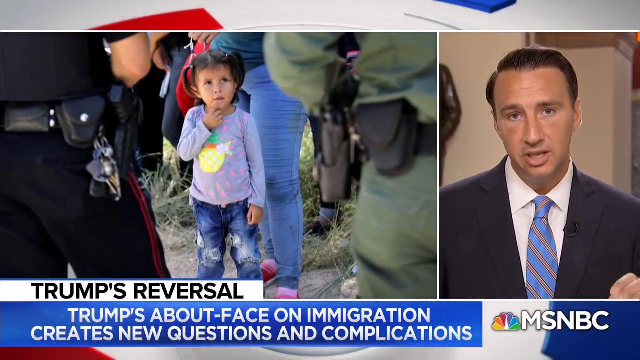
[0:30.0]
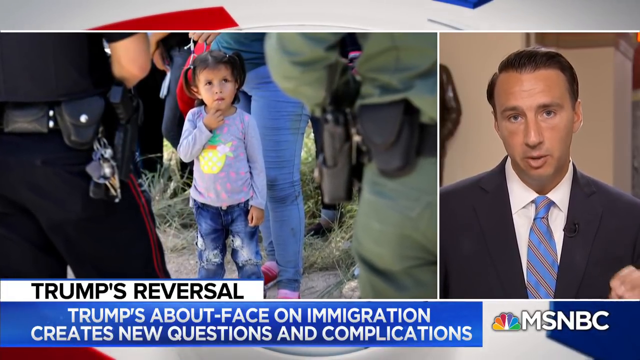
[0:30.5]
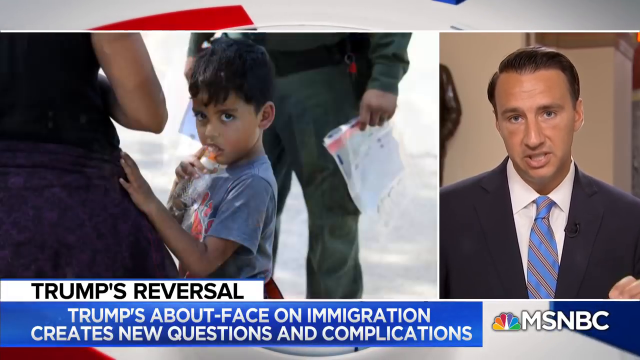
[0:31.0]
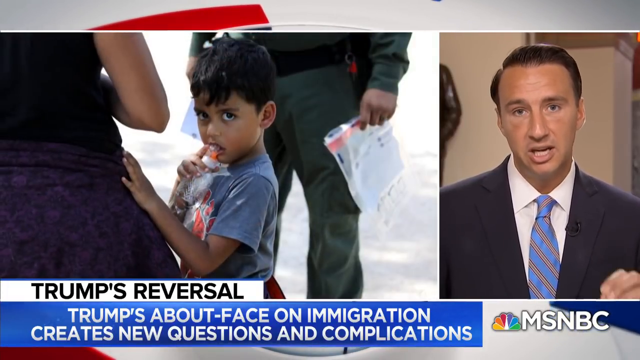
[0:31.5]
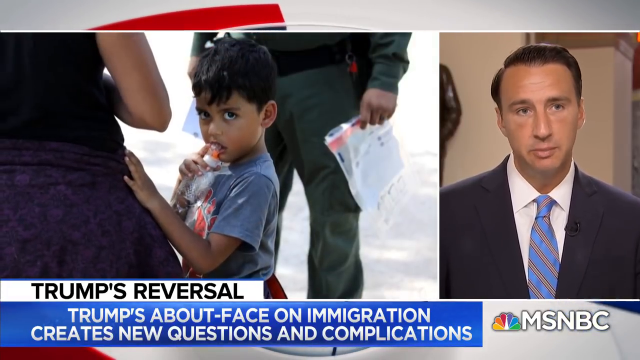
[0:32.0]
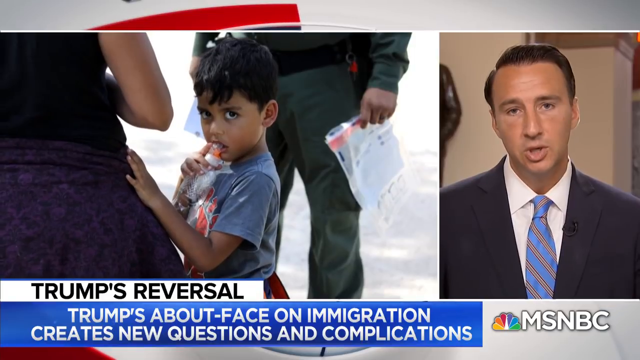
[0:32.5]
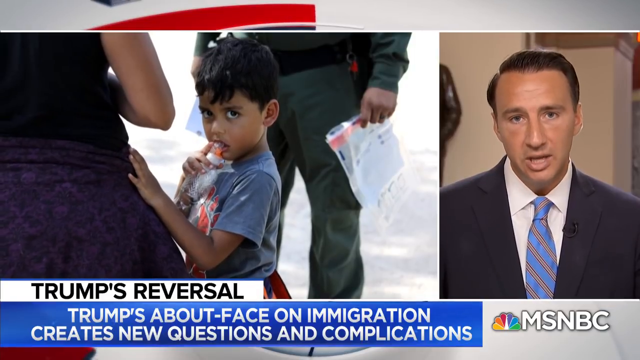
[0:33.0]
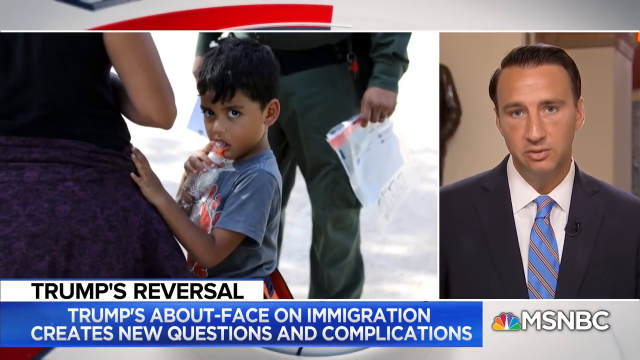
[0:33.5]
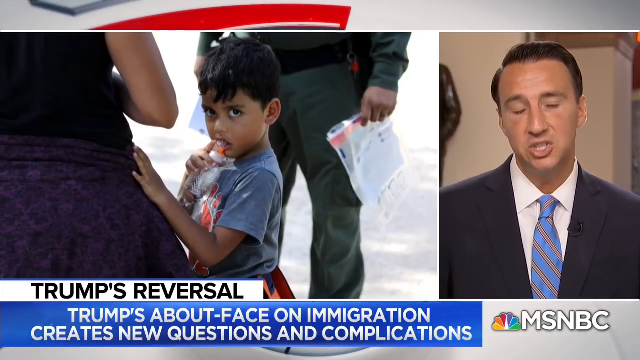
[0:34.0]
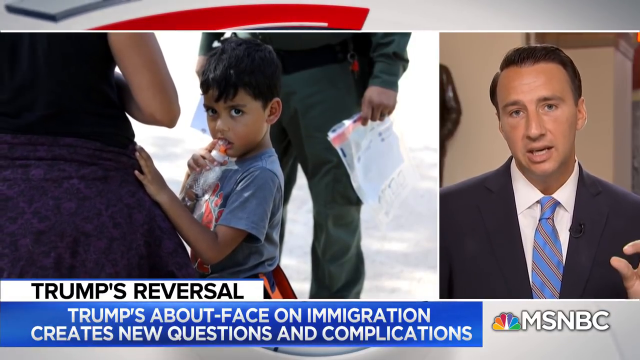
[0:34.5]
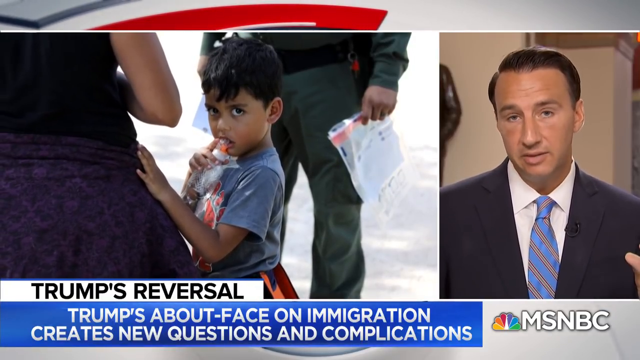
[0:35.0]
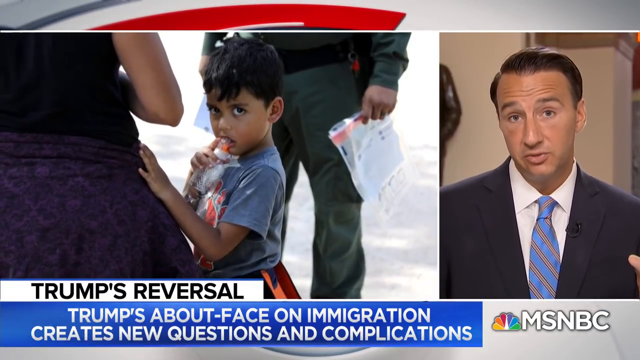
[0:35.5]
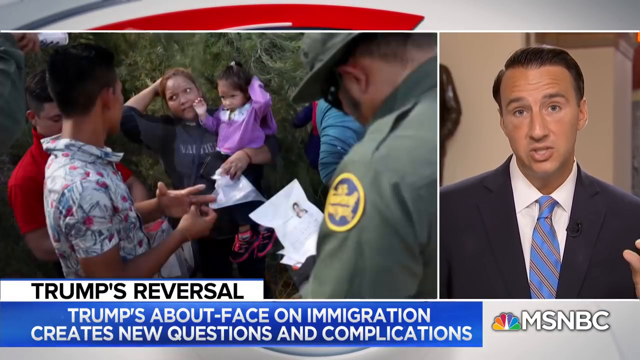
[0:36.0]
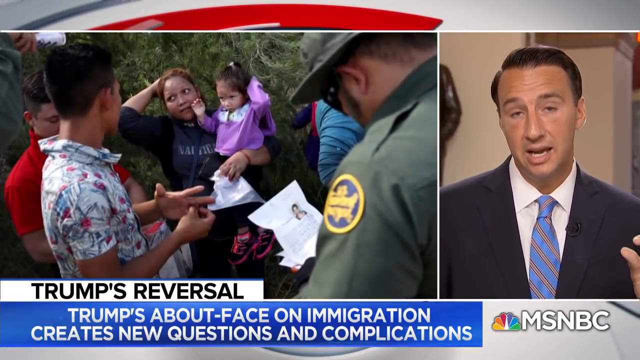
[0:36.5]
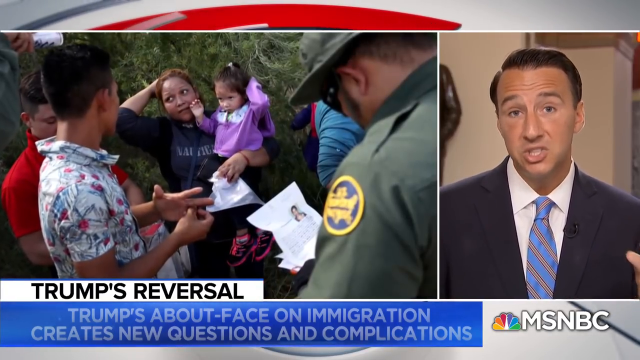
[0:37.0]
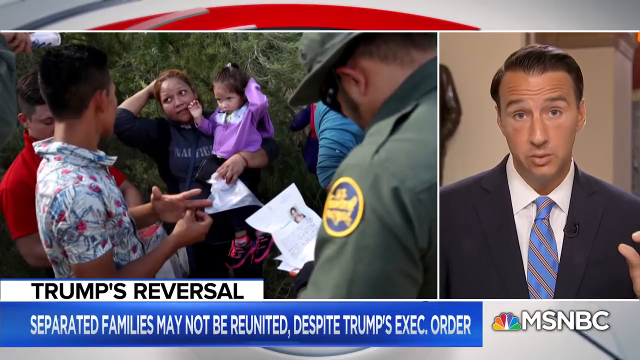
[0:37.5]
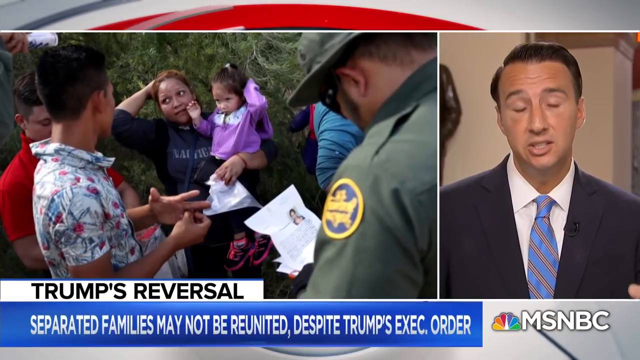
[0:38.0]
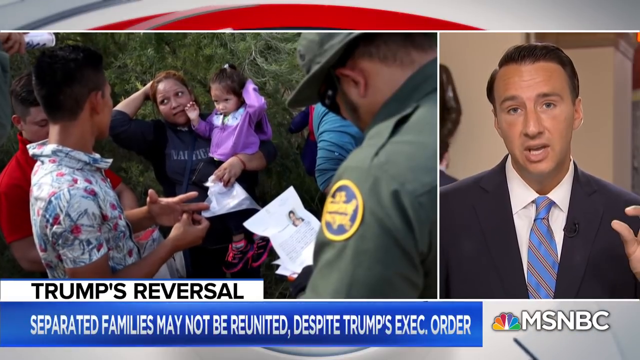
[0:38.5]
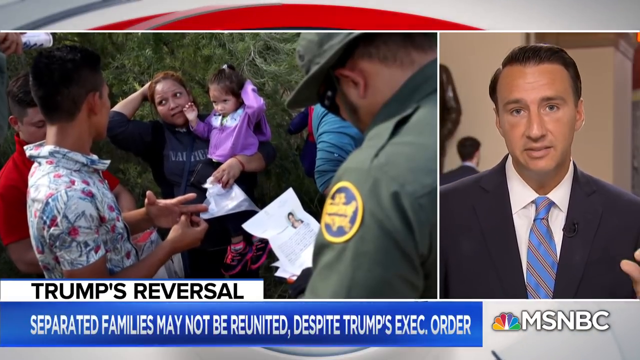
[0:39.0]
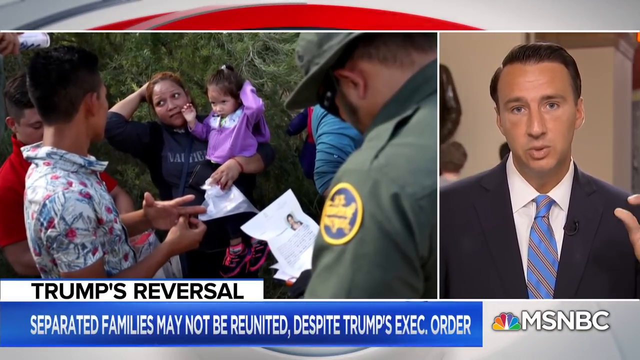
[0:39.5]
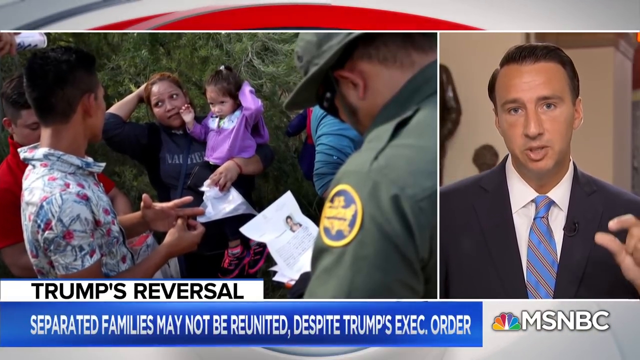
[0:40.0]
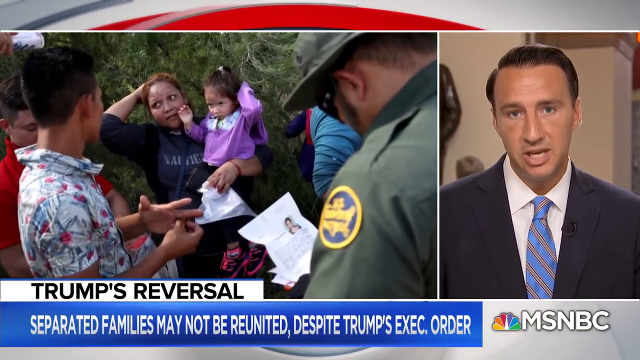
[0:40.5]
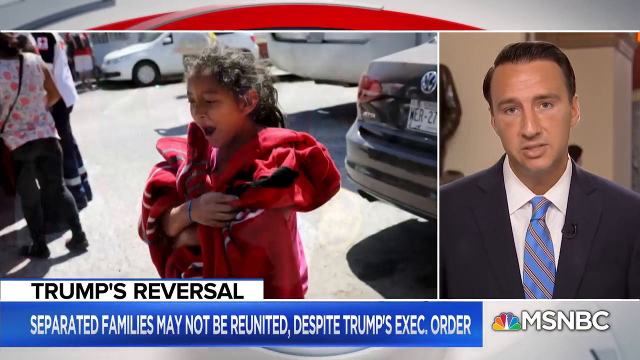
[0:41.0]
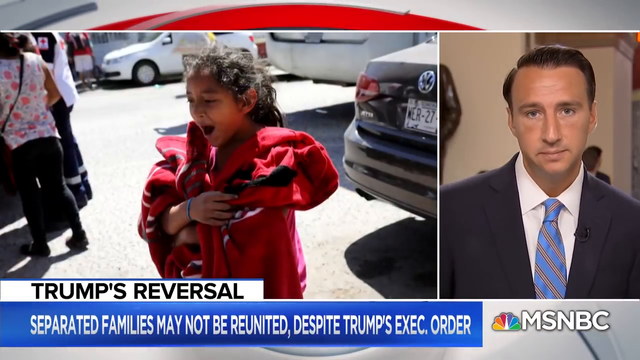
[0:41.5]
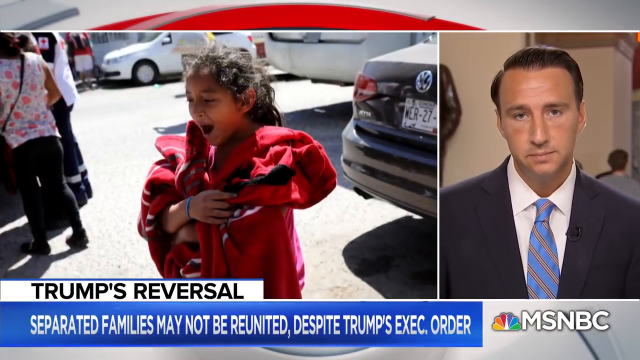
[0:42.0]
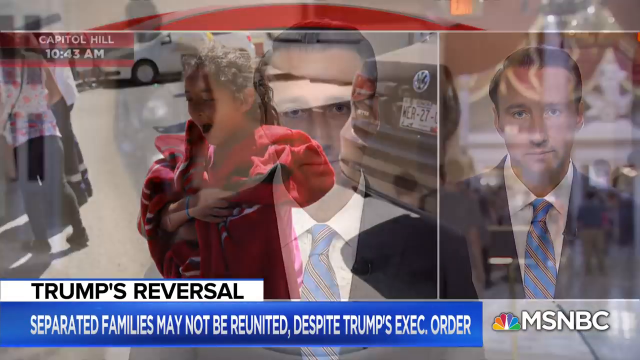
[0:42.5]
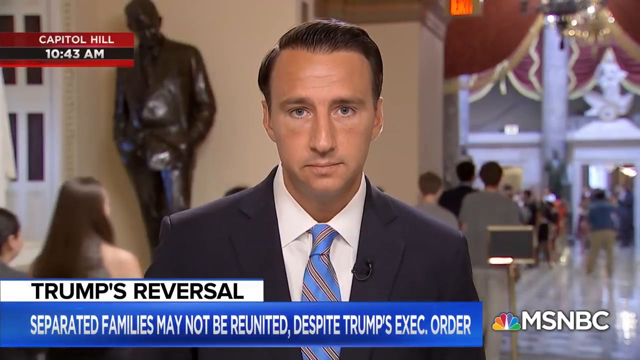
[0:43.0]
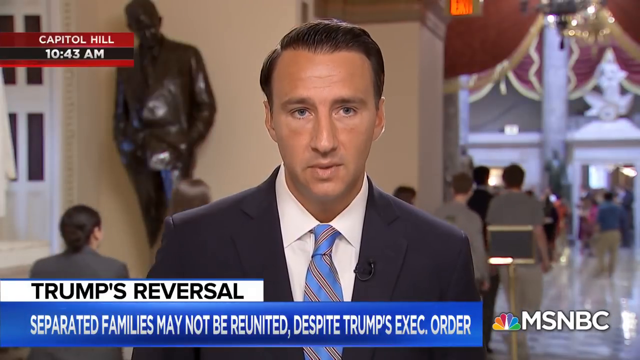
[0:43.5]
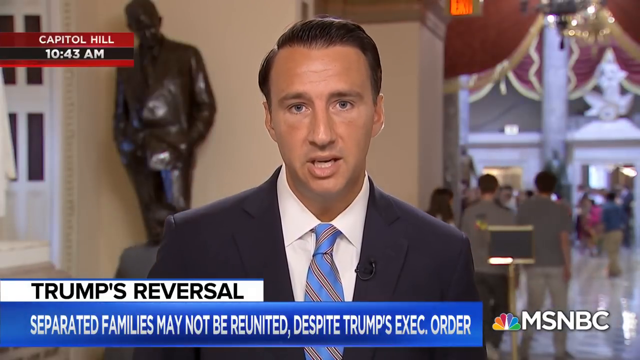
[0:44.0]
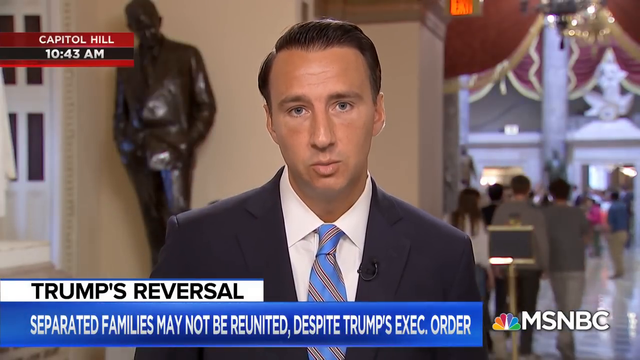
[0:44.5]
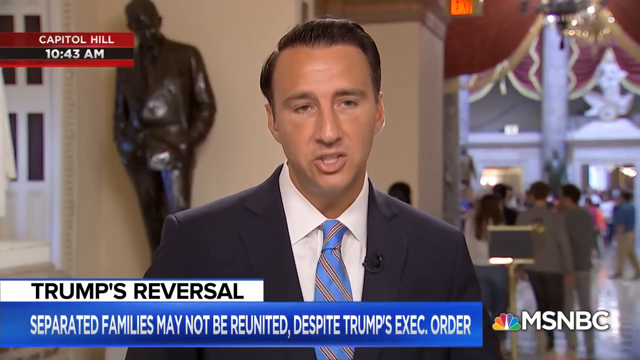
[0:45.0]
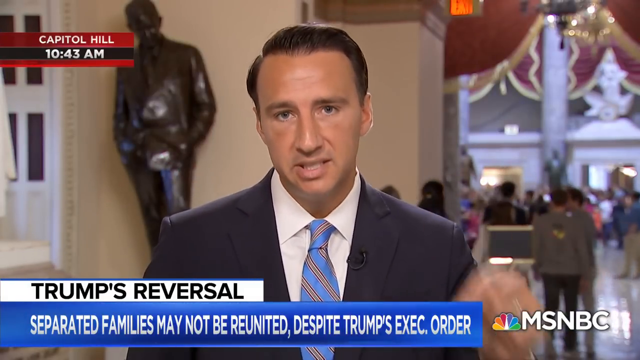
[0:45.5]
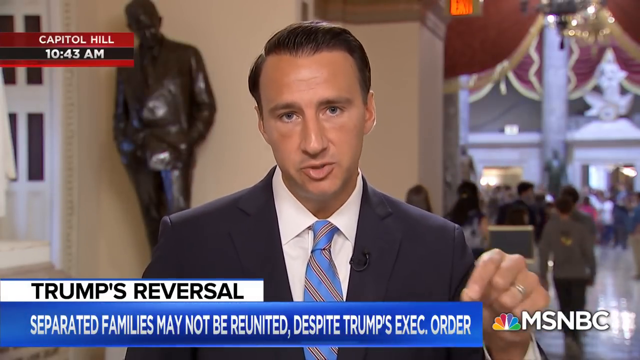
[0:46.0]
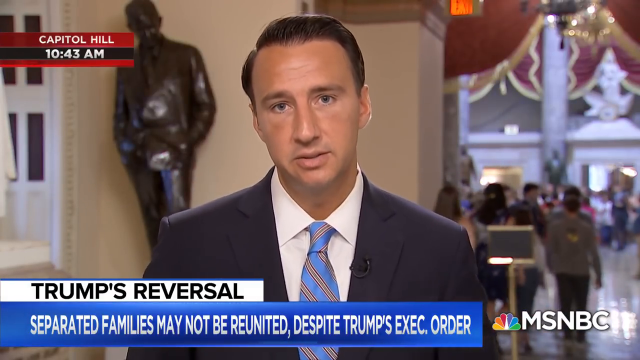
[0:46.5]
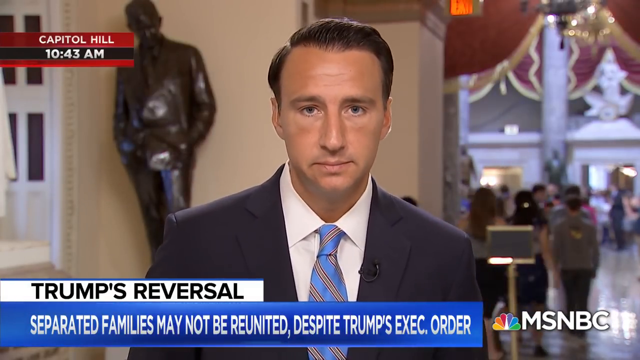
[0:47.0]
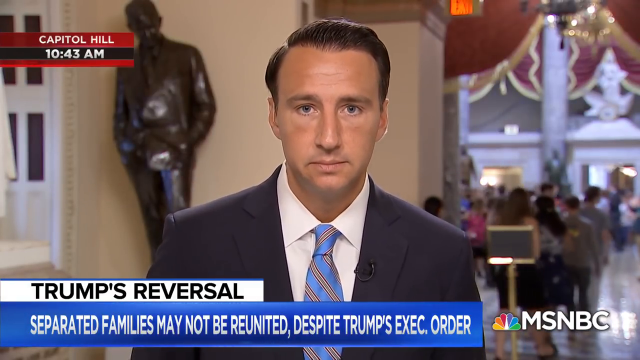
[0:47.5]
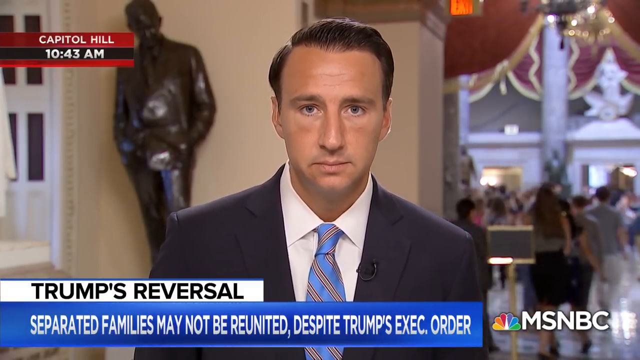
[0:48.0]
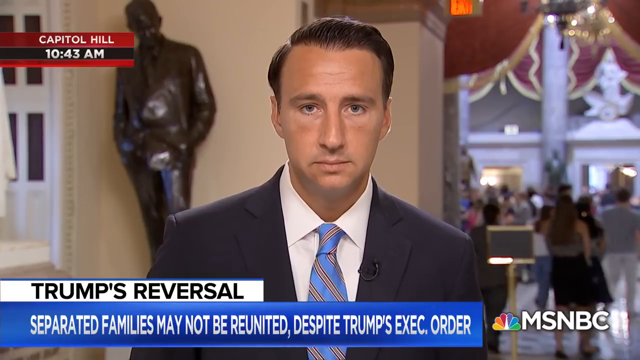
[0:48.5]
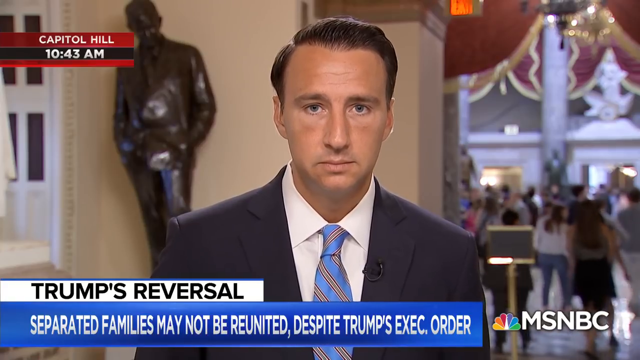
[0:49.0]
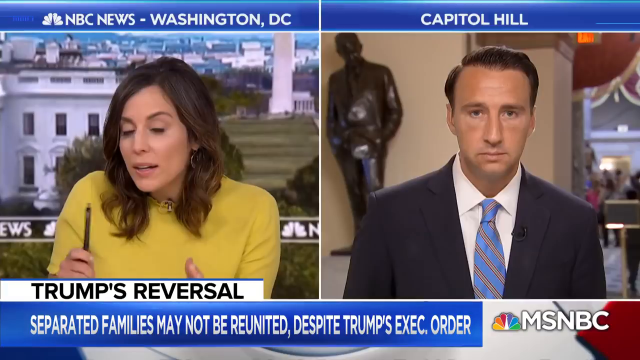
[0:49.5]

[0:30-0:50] Representative Ryan Costello remains on the right-hand side: a Caucasian man with short brown hair parted on the right side and combed over, wearing a dark-colored jacket, a white button-up shirt and a medium blue tie with candy-cane-like red and white diagonal stripes. His shirt and tie look a little wrinkled, and his left shoulder slopes further down than his right. He is in one of the congressional buildings, with a statue over his right shoulder and a group of people coming in over his left shoulder, so he seems to be in an open area. The split screen continues, with two-thirds on the left taken up by images apparently of people detained by ICE. A photo in the center shows a young boy who appears to be Latino, with a water or juice bottle hanging out of his mouth. He wears a steel gray shirt with a red and white pattern or design on the front, and has short dark hair with a little bang over his forehead and large eyes. He stares directly at what is apparently the camera person, and his left hand is on the right hip of an adult, apparently his mother or a trusted adult, seen only from torso to thighs, wearing a black short-sleeve or tank top with a purple garment wrapped around the waist. Facing them, seen from about the waist down, is apparently another Border Patrol officer in green, holding a plastic bag with some items in the left hand and what looks like papers in the right, with what looks like a key ring hanging from the belt. The background of this image is somewhat blurred. Another image shows a woman holding a child; they look Latino. The woman wears a black shirt, possibly Nautica, with long sleeves pushed up some, and dark pants, and has auburn hair; her right hand is on her head. The girl she holds wears dark pants, black shoes with pink soles and laces, and a lavender top with a light blue inset pattern around the neck, with her hair in a ponytail; she looks to be putting her left hand in her hair, apparently mirroring the woman holding her. To their right is a man in a red short-sleeve polo, another man in a patterned short-sleeve shirt, and the arms of someone in fatigues, apparently another Border Patrol officer. Behind them there look to be trees or brush. In the foreground on the right is an ICE officer in a green uniform with a blue and gold logo patch on his shoulder, a green hat and what looks like sunglasses, looking down at folded paperwork in his hand that appears to be a photo of the woman in front of them. The next image shows a little girl in what looks like a city or urban area, with about three parked cars on the street. Her mouth is open; it is unclear whether she is mid-yawn or crying. She has what looks like a red, black and white patterned blanket around her shoulders, a wristband on her left wrist and her hair in a messy ponytail; she appears Latino and is looking down. In the background on the left are about three people: what appears to be a woman in a floral-patterned shirt, dark leggings and dark shoes or slides; another person in dark or black pants and shoes and a white and black shirt; and, far in the background, a person who looks like they are in white shorts and a red and black shirt. The news crawl at the bottom reads "Trump's reversal" and underneath "separated families may not be reunited despite Trump's executive order". The images of the migrants are then removed, leaving a full-screen image of the congressperson talking. He gestures with his left hand, his forefinger and thumb together, and looks a little exasperated, his face downcast but not scowling. Behind him, larger groups of people pass by, who look like young people, apparently visiting the Capitol building.